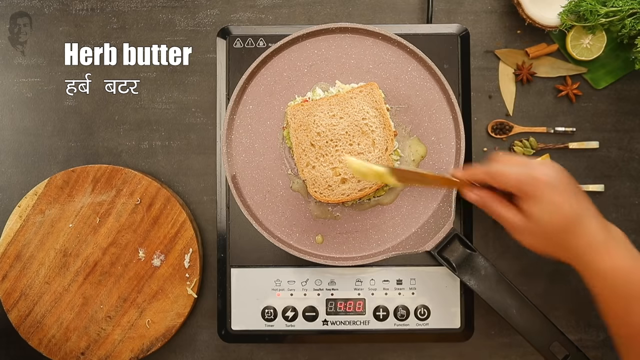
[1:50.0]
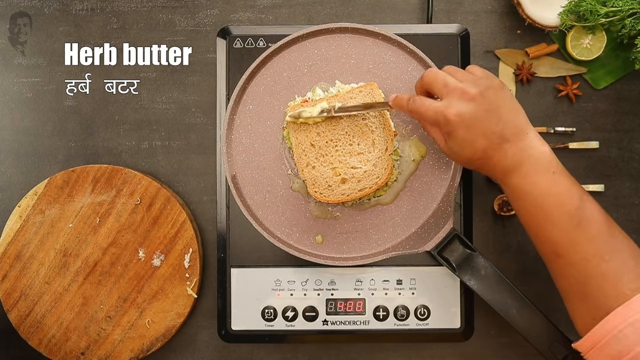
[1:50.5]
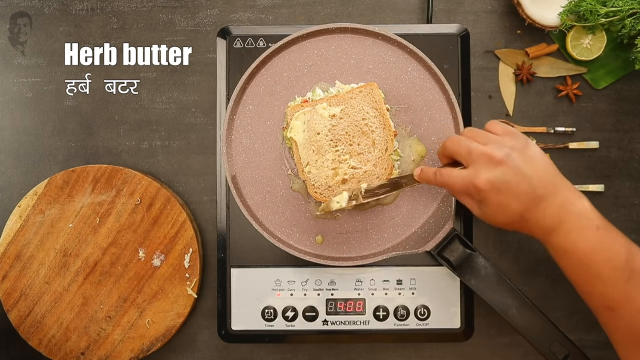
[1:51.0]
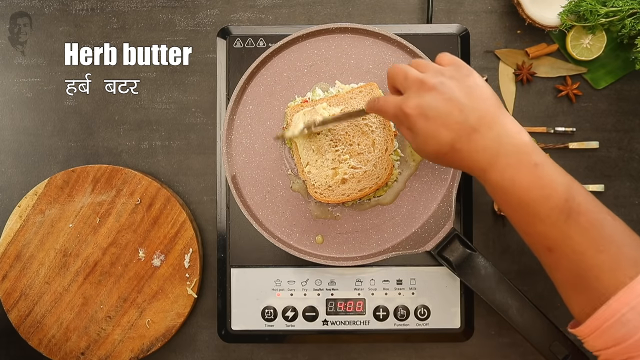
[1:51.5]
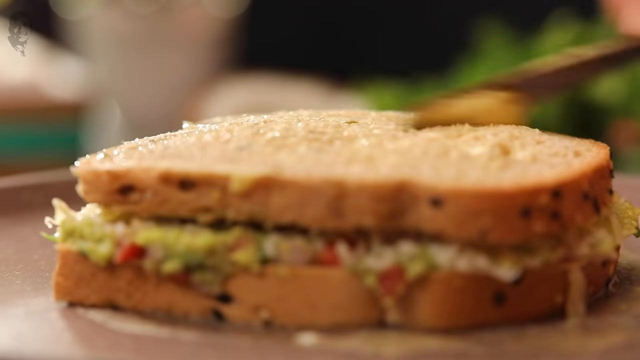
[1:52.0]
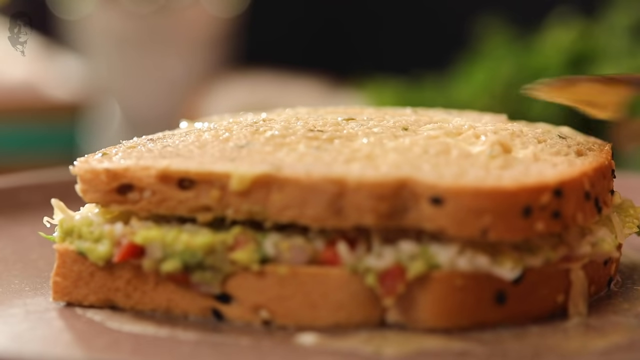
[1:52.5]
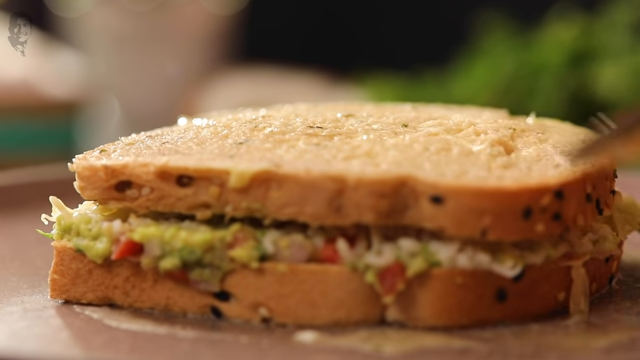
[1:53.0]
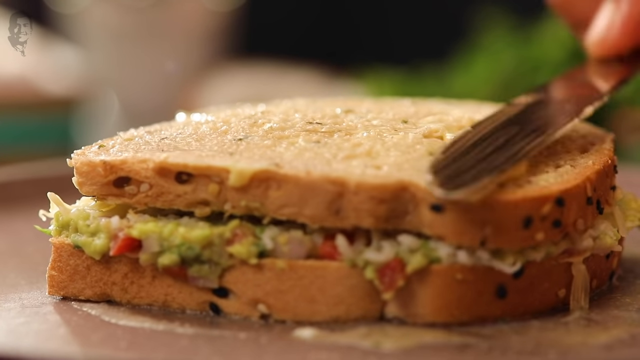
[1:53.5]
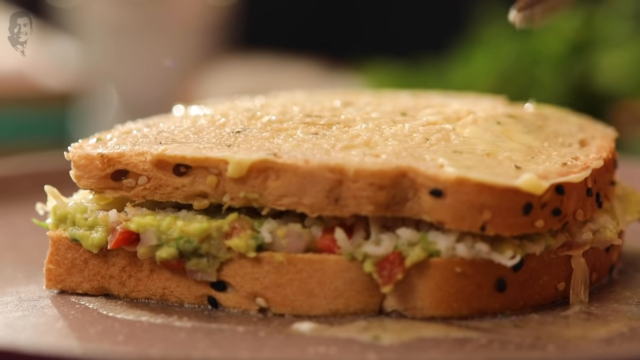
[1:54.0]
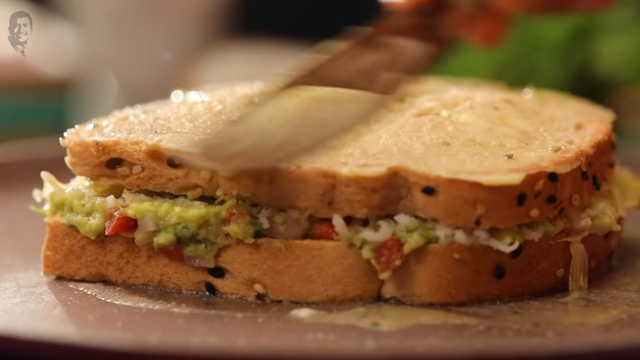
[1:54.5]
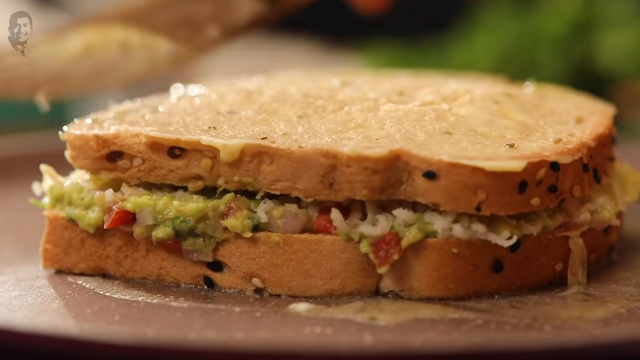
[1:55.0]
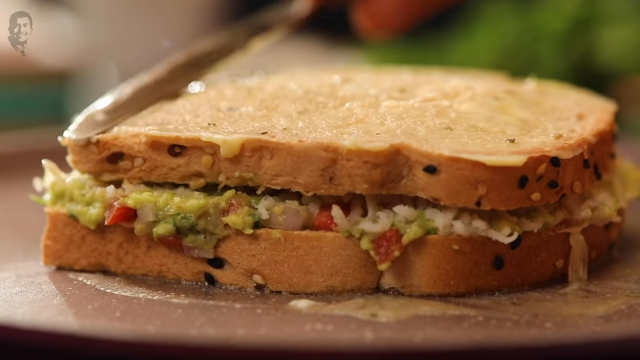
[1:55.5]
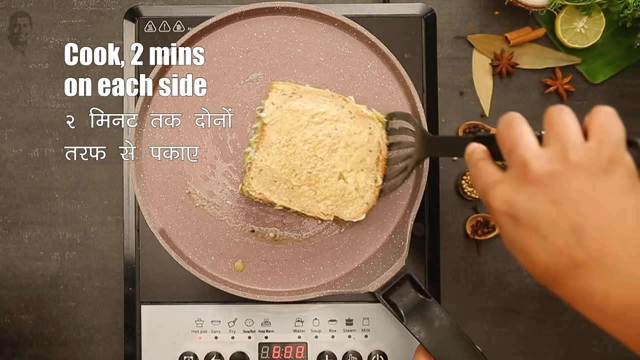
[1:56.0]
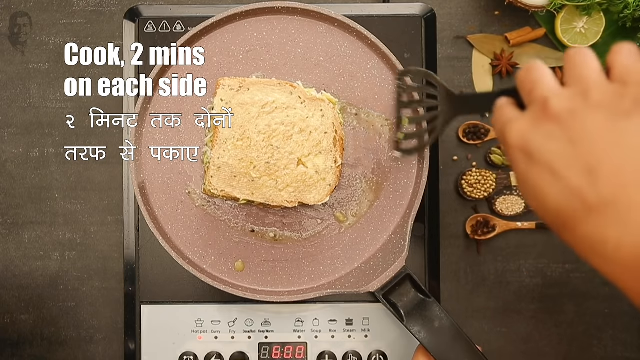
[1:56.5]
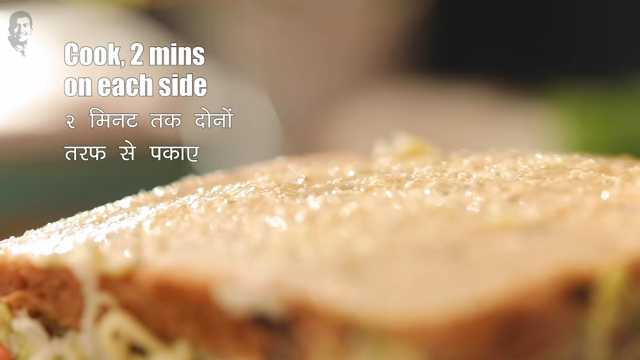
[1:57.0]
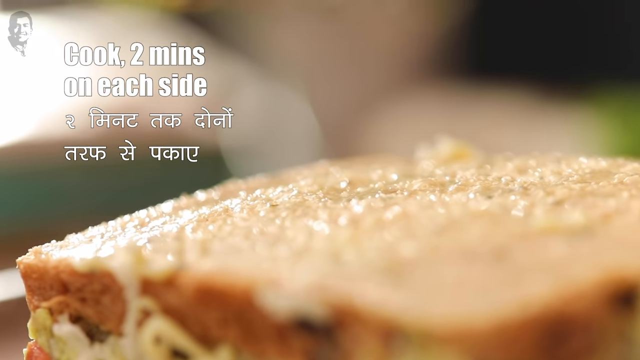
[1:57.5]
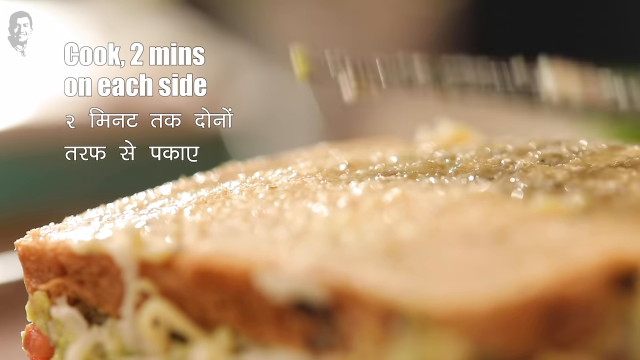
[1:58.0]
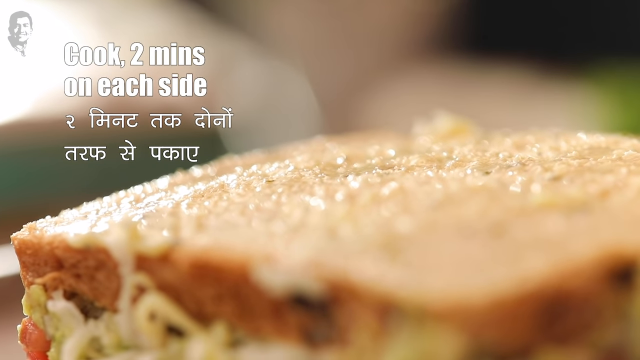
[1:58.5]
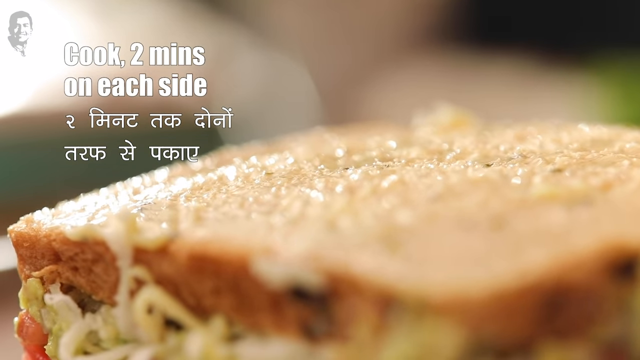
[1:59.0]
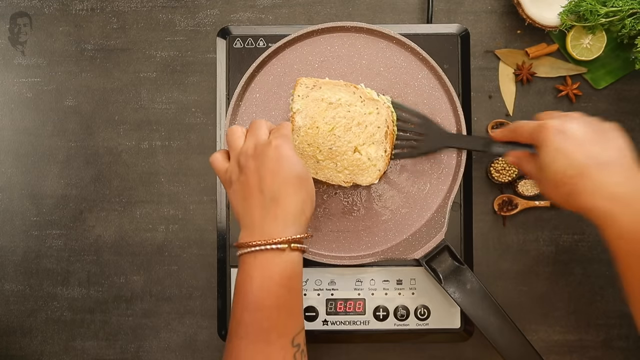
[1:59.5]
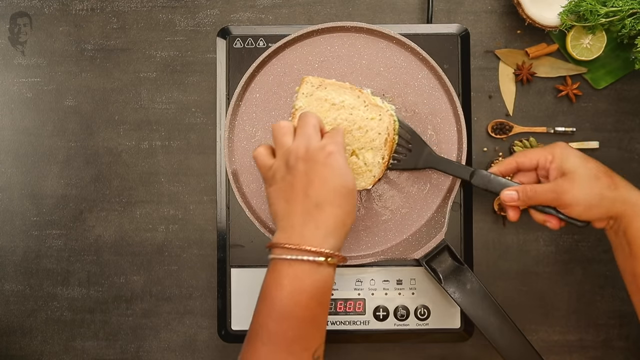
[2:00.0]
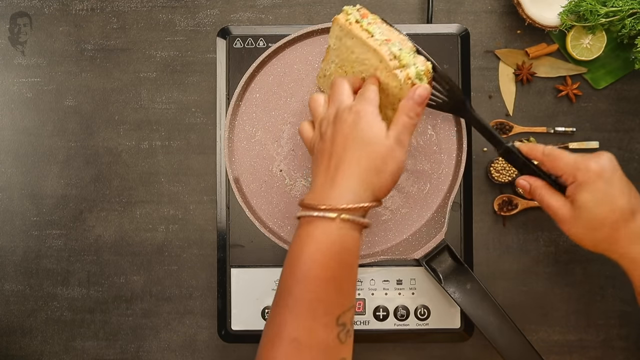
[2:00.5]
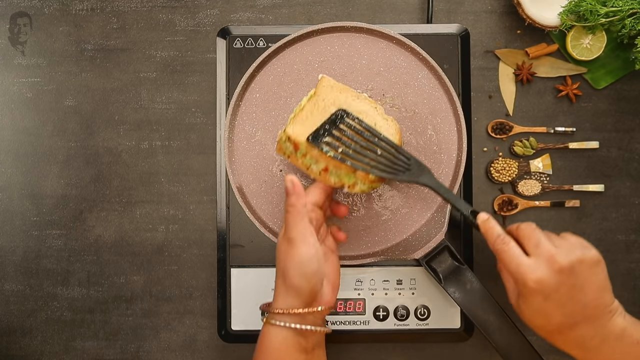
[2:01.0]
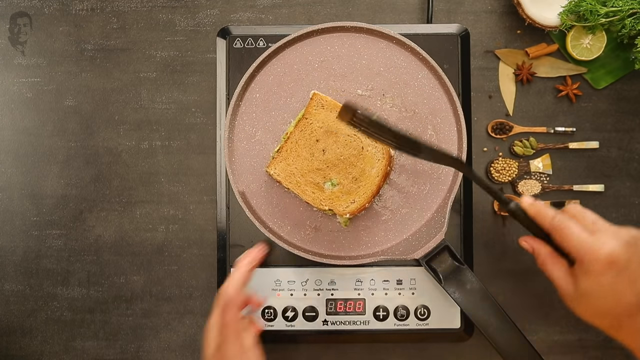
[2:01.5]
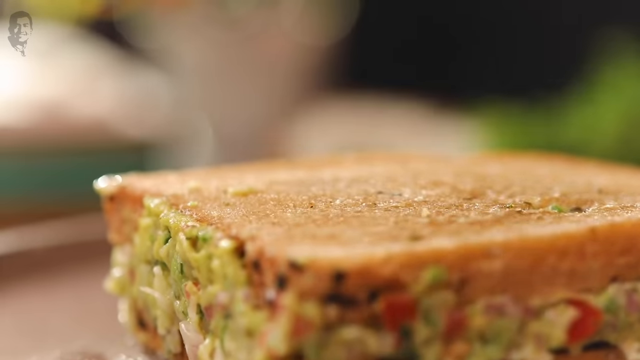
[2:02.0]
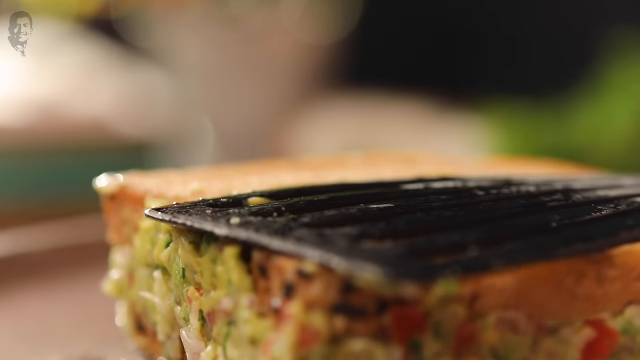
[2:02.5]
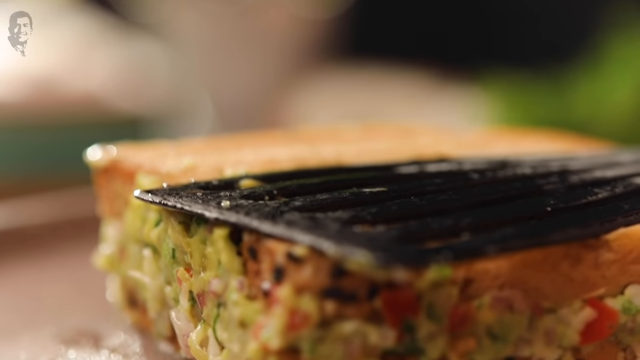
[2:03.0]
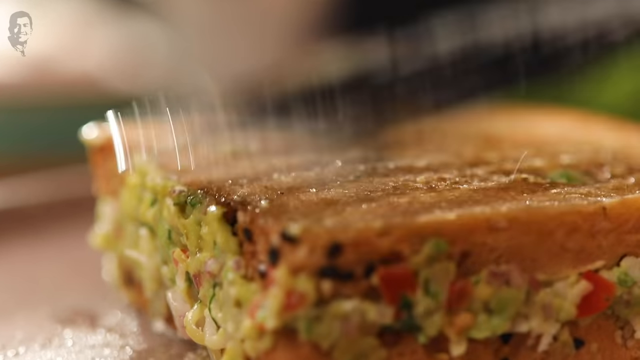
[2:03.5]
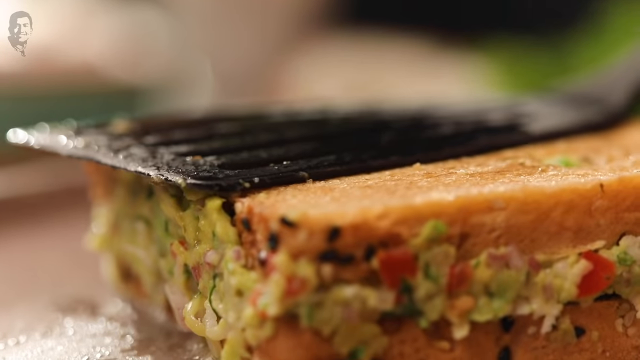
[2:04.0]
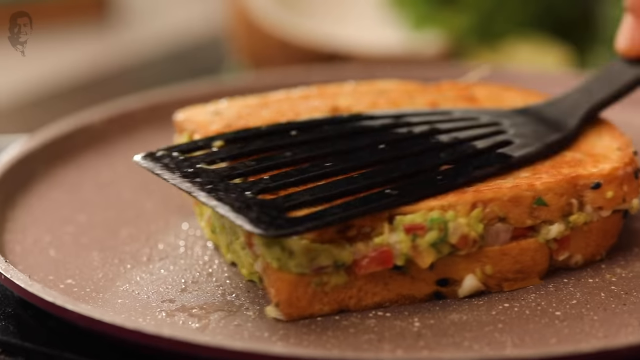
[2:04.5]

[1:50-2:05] The sandwich is in the frying pan, and the woman centers it in the middle. She puts more butter on the outside of the top slice, all around the top side and onto the very sides of the bread, and pats it down. Holding the top of the bread down with her hand and a finger so it does not fall apart, she turns the sandwich over with a spatula and presses it down with the spatula. It is apparently cooked for two minutes on each side. The brown wood cutting board is now empty.